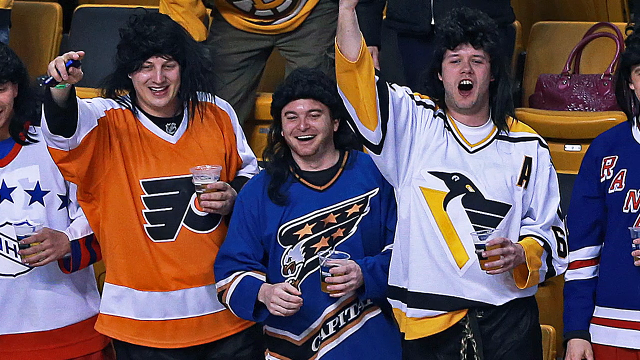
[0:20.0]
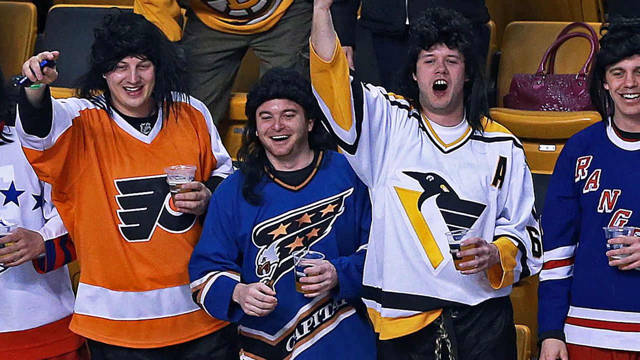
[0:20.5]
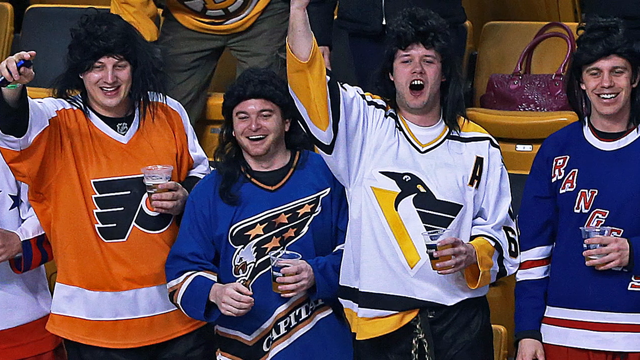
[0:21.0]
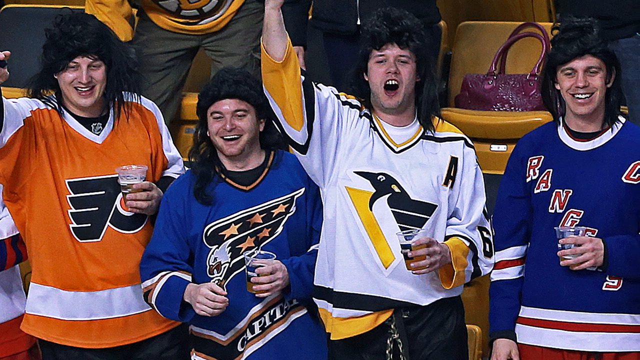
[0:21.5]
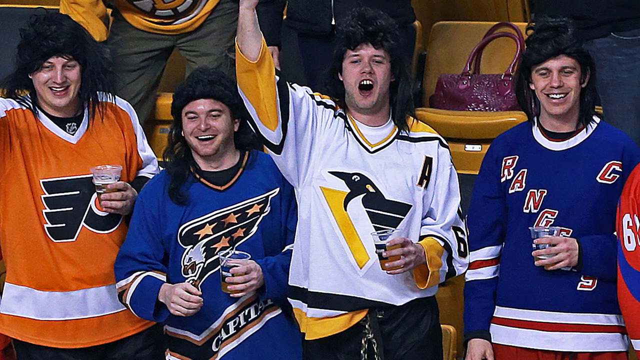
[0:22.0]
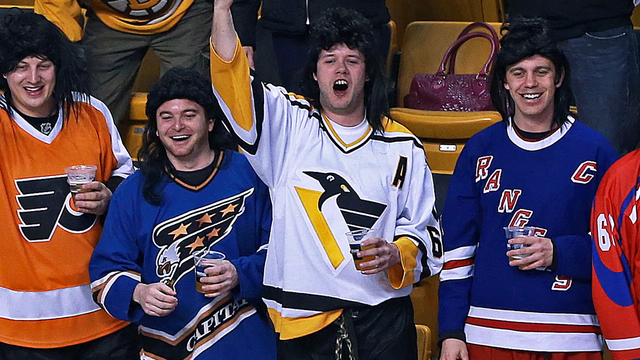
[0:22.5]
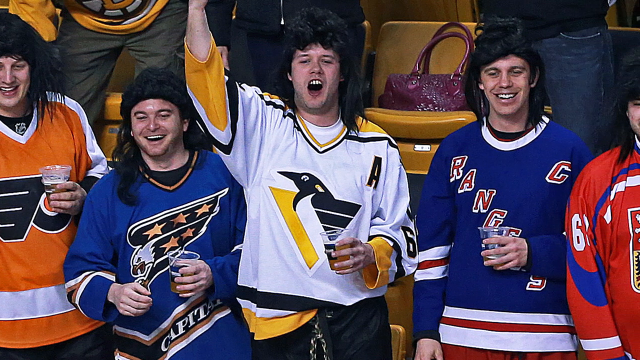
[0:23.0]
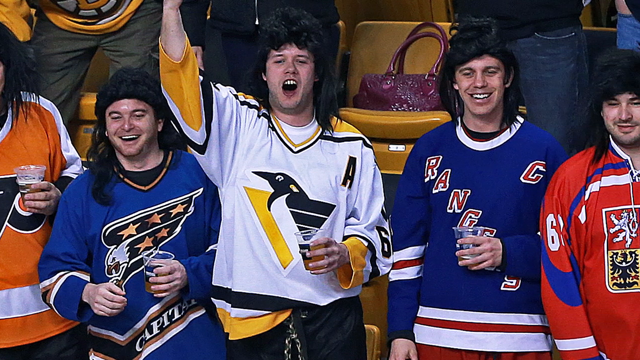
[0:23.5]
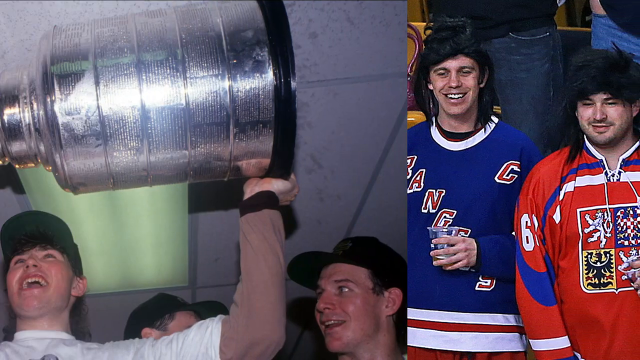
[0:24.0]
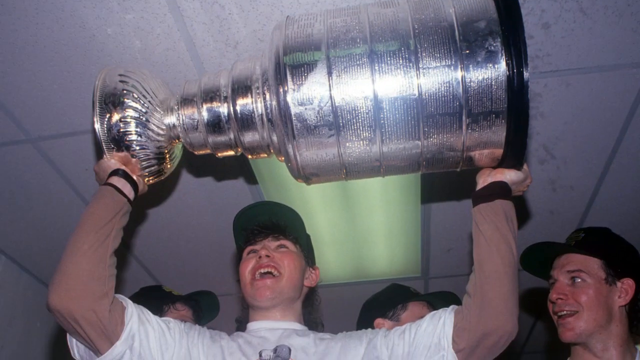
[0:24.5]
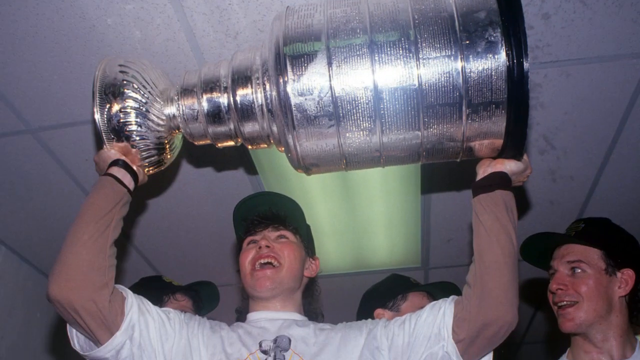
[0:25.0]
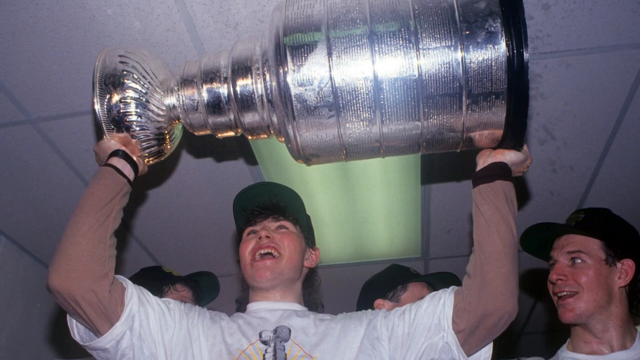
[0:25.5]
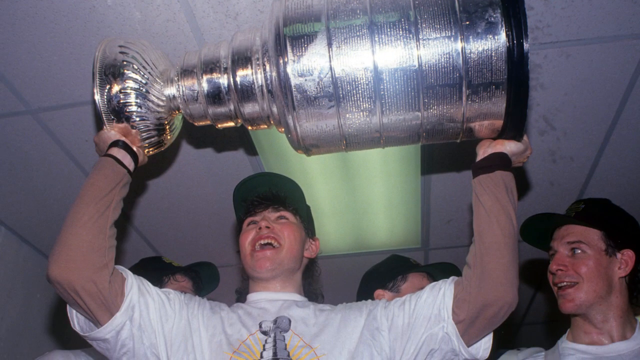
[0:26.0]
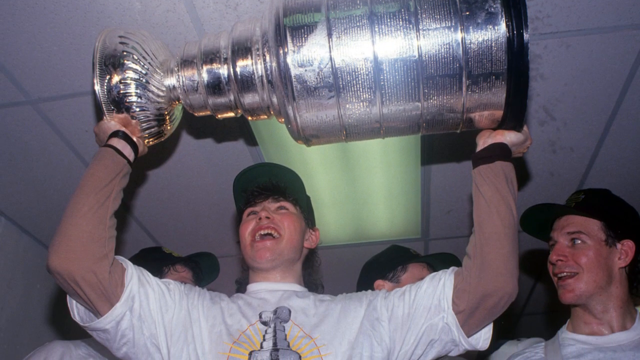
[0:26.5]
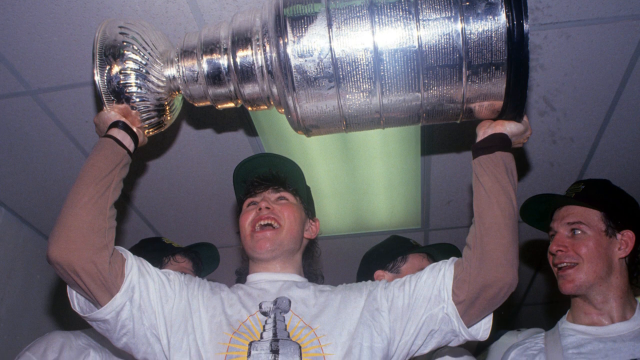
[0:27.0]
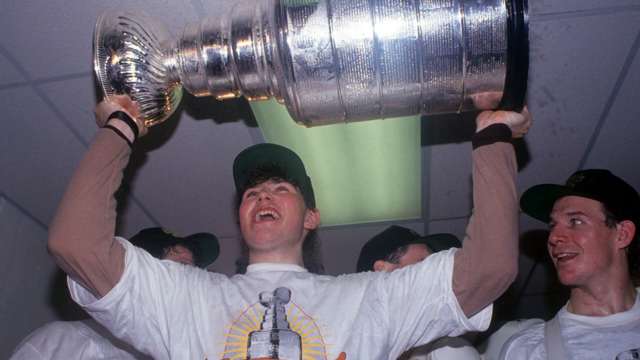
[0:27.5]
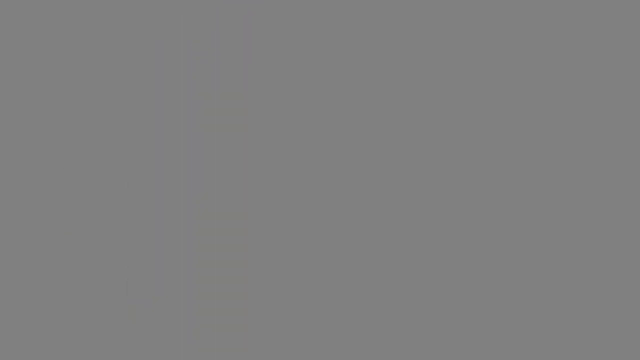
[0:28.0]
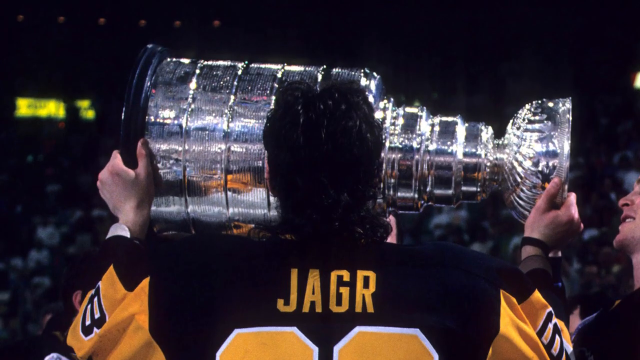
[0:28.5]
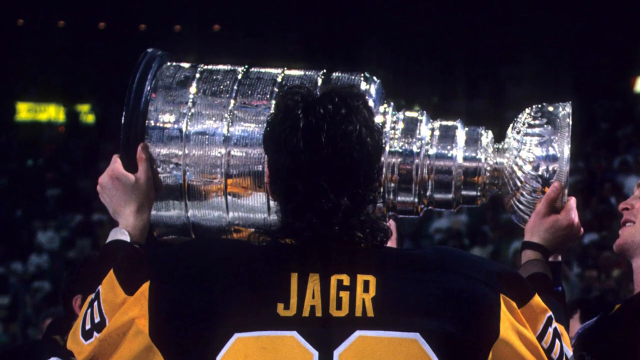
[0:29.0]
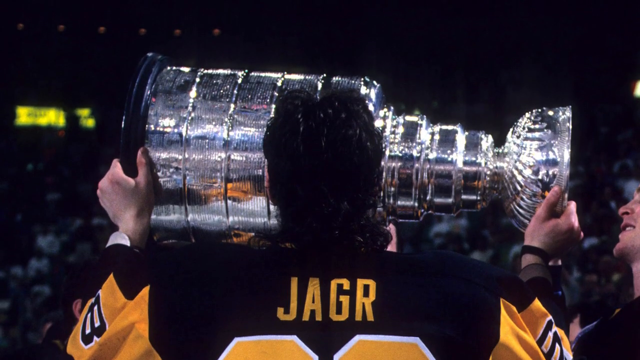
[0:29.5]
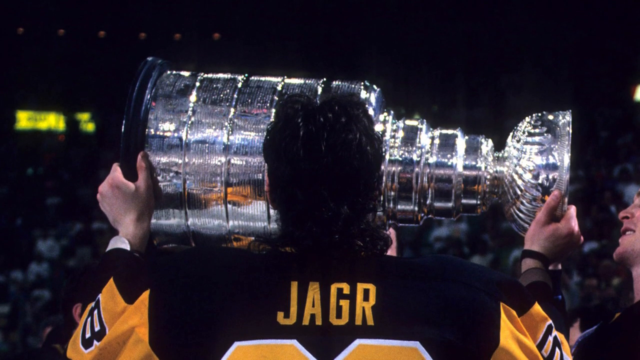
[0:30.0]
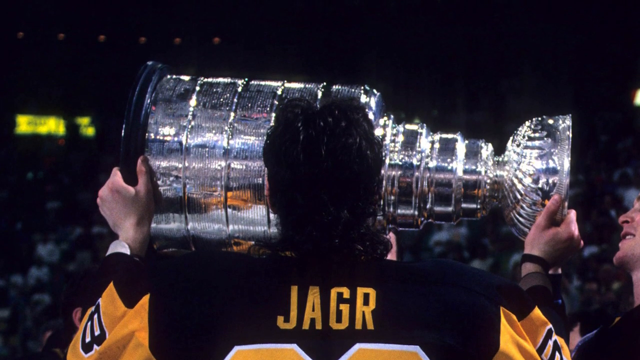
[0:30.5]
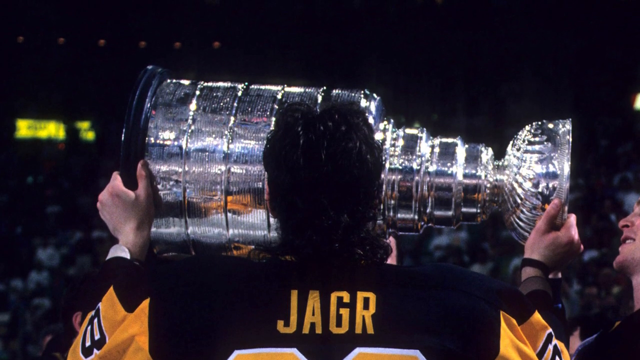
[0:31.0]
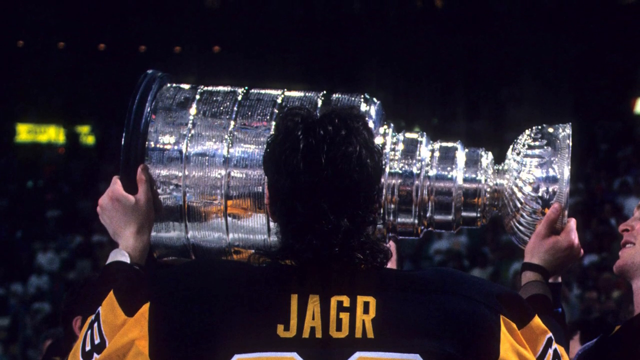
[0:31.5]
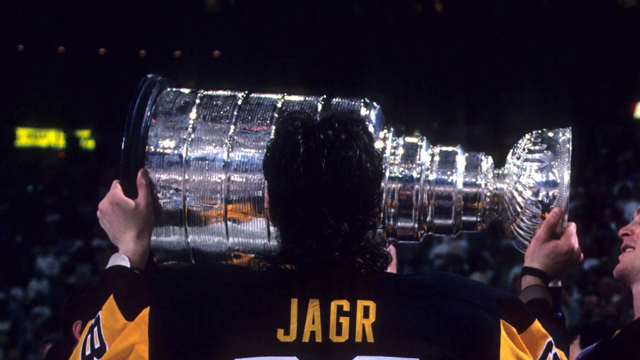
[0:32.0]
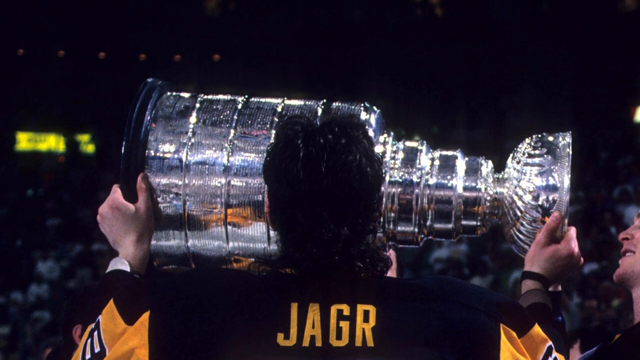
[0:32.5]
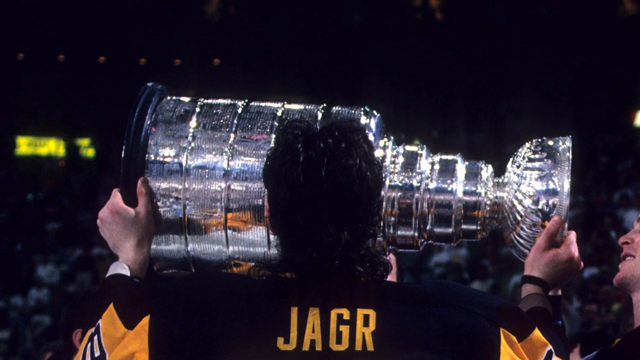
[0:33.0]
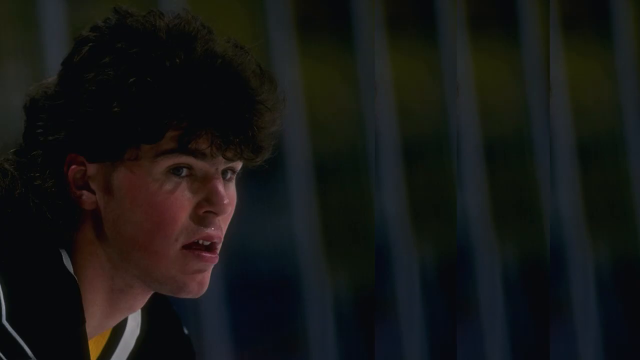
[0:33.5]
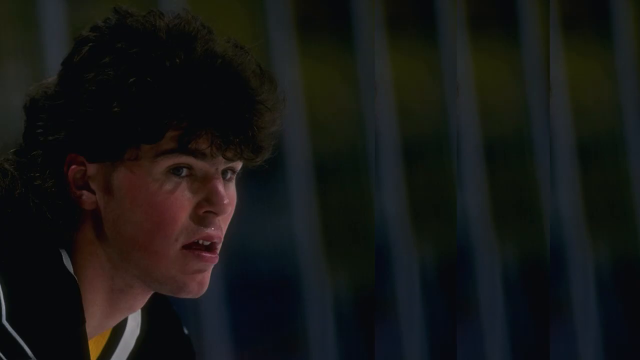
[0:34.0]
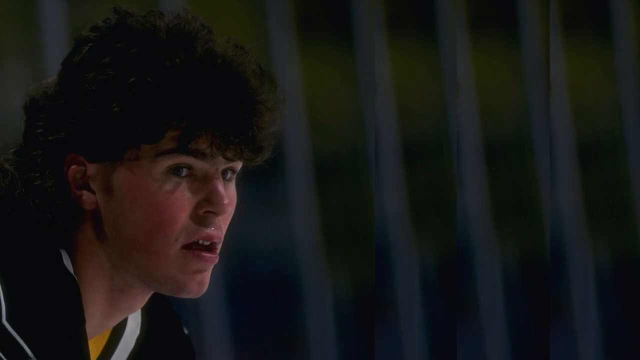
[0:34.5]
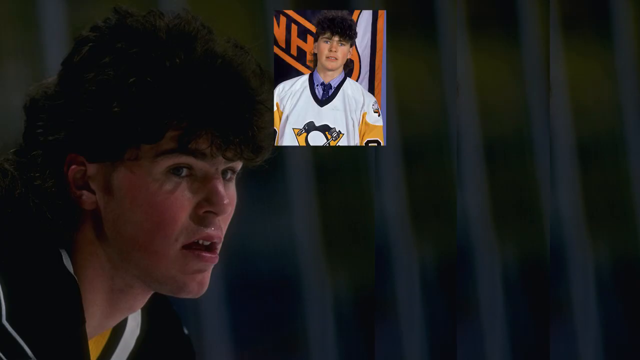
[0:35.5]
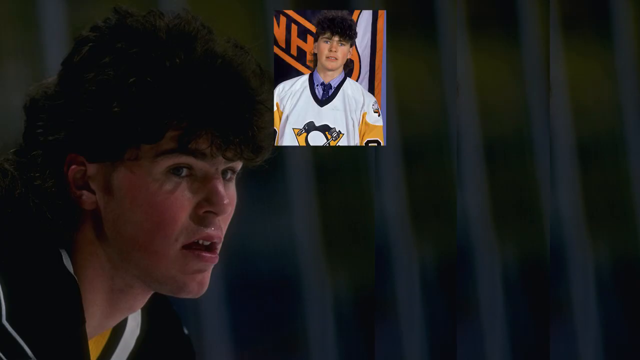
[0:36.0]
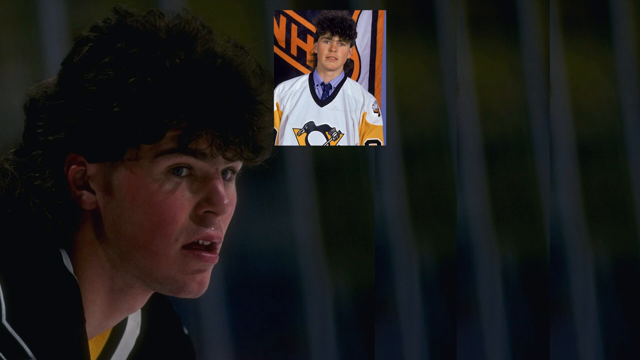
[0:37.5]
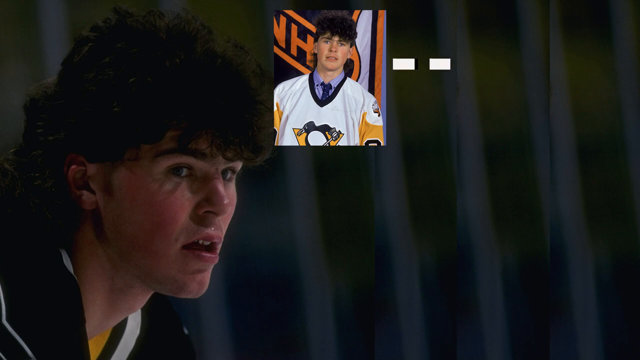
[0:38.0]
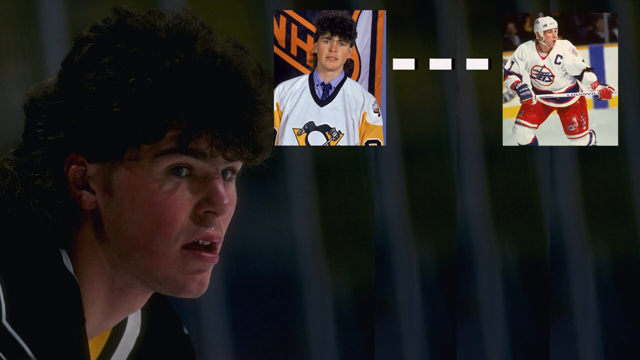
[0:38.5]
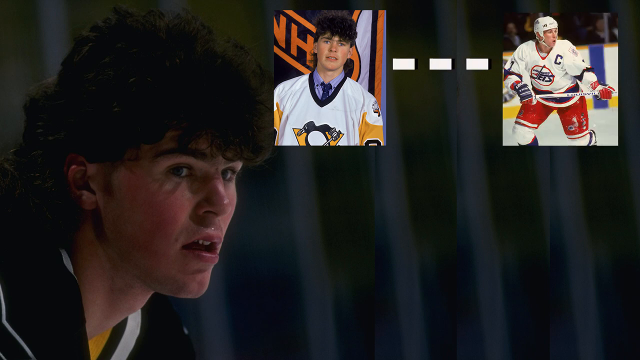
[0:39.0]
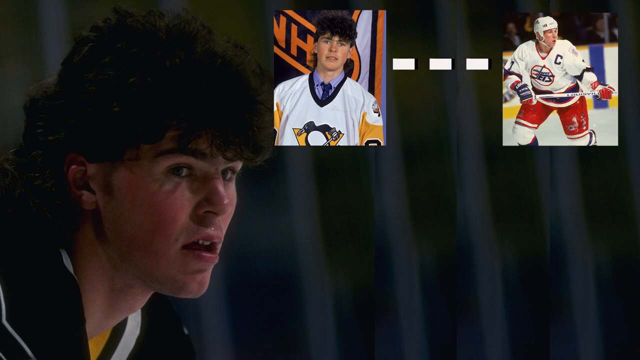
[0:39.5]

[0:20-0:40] The players continue holding beer and look like they are celebrating. The scene moves to the locker room, where the main player is holding a cup, then flashes to the arena, where the player holds a silver cup, apparently celebrating the victory. The player is then shown in an intense engagement in the arena. Next, two pictures of players appear connected by a white dot, possibly indicating that the players will meet head to head.